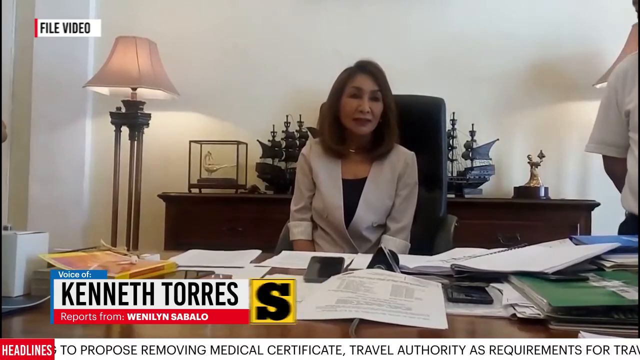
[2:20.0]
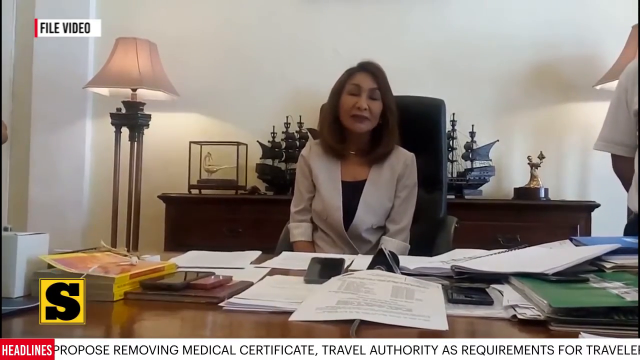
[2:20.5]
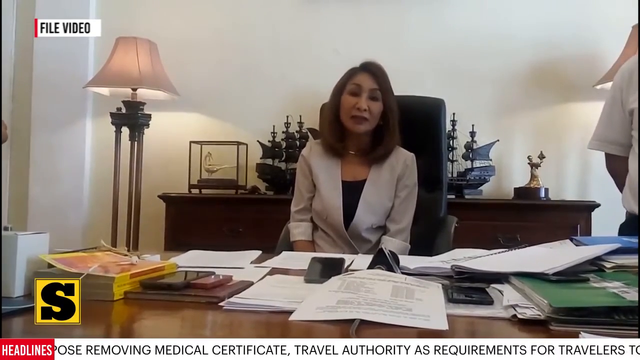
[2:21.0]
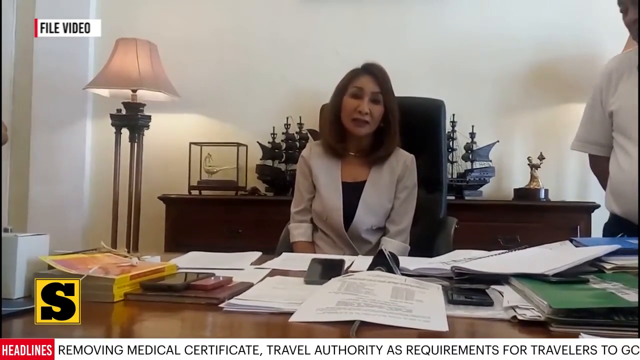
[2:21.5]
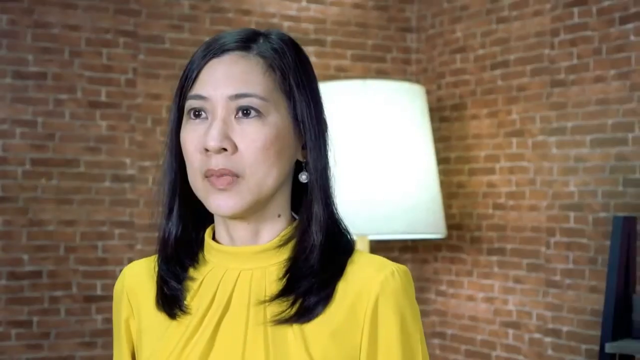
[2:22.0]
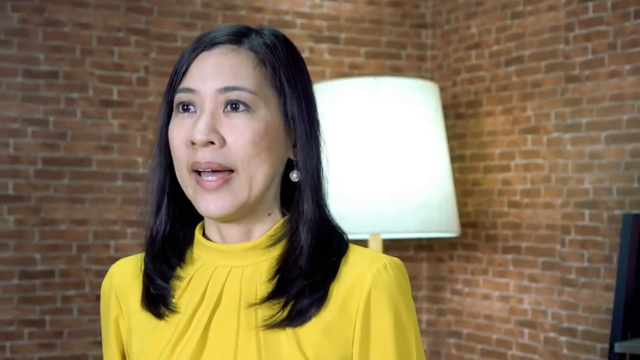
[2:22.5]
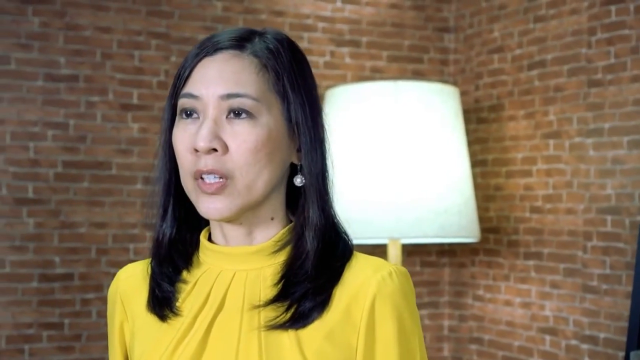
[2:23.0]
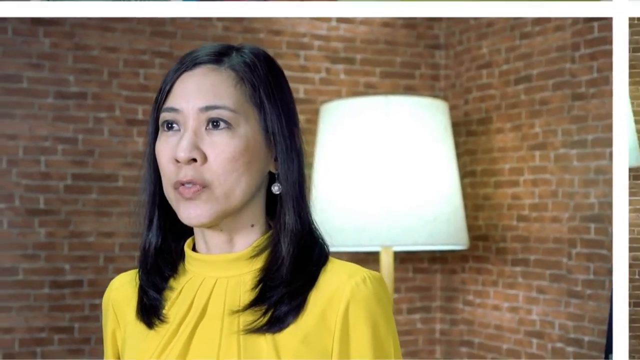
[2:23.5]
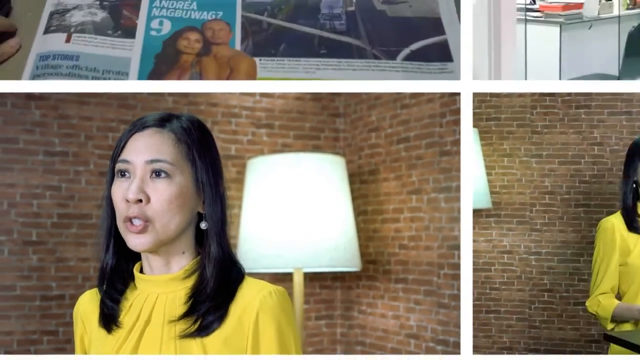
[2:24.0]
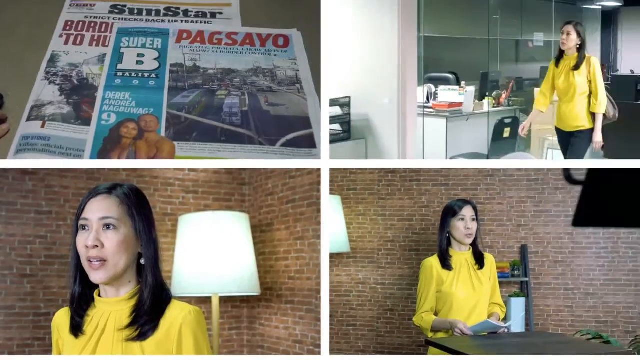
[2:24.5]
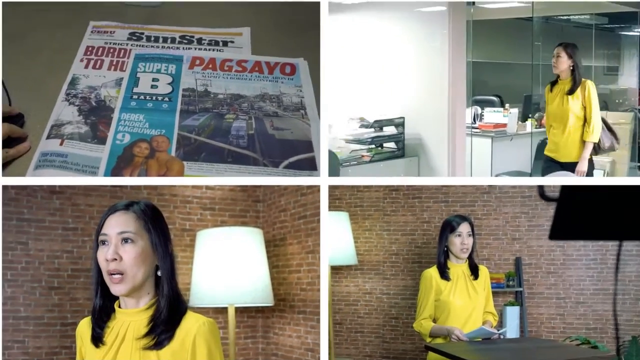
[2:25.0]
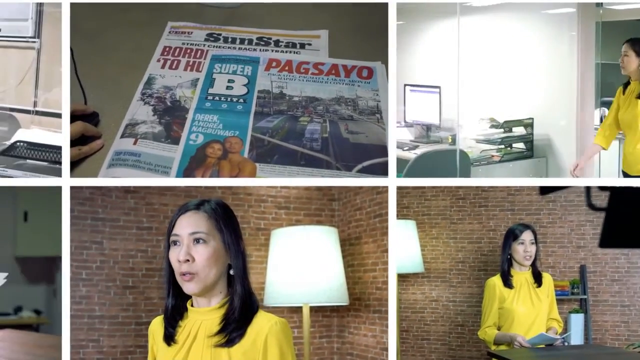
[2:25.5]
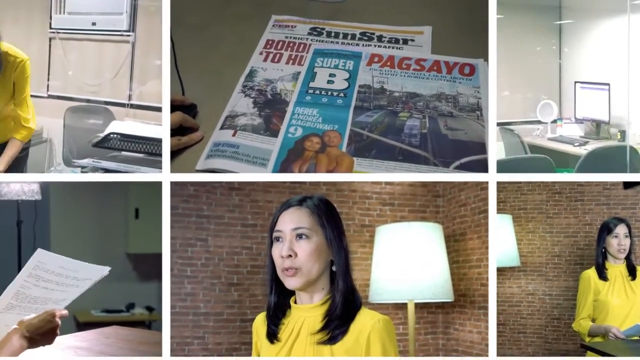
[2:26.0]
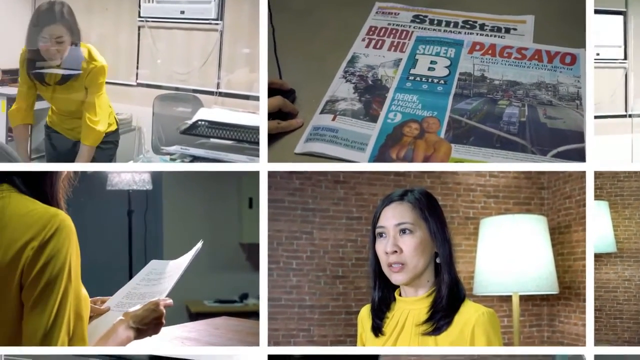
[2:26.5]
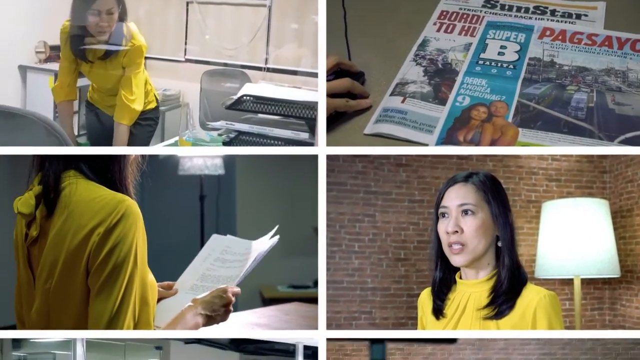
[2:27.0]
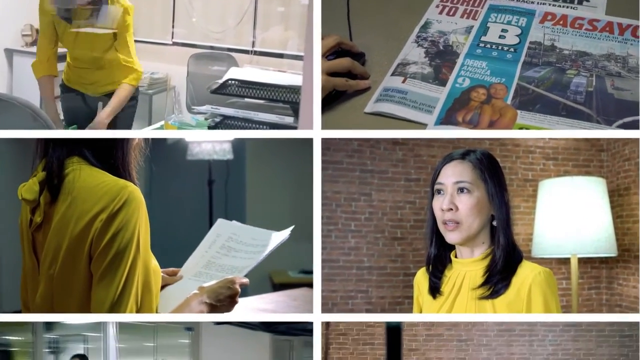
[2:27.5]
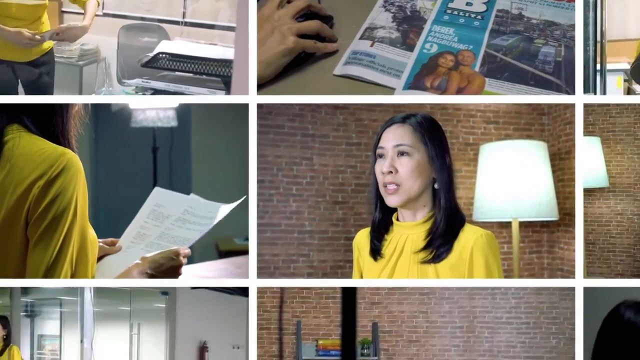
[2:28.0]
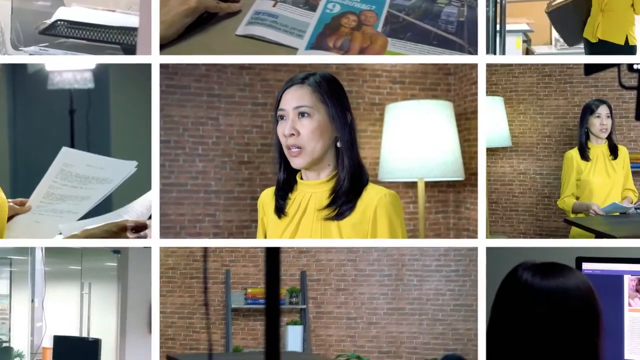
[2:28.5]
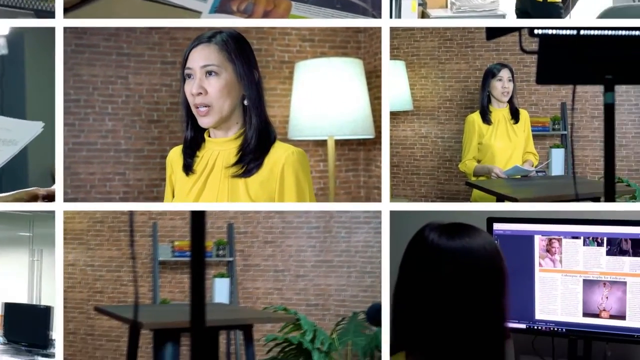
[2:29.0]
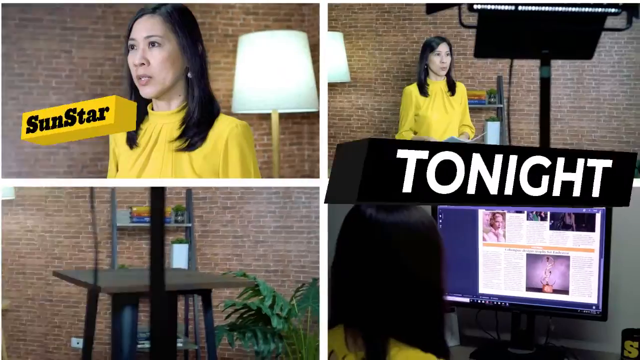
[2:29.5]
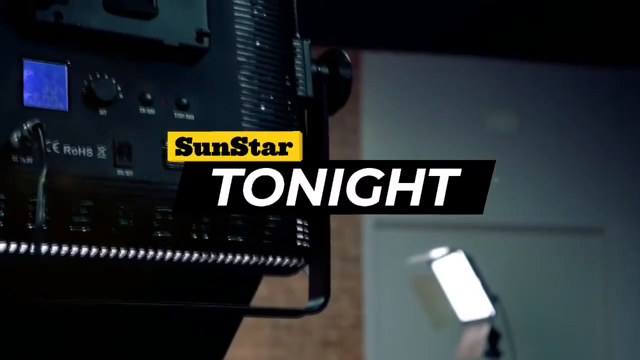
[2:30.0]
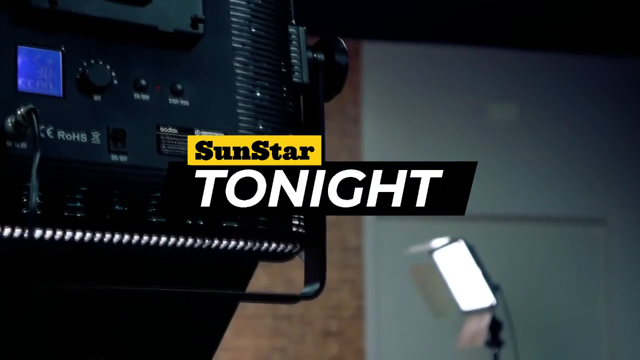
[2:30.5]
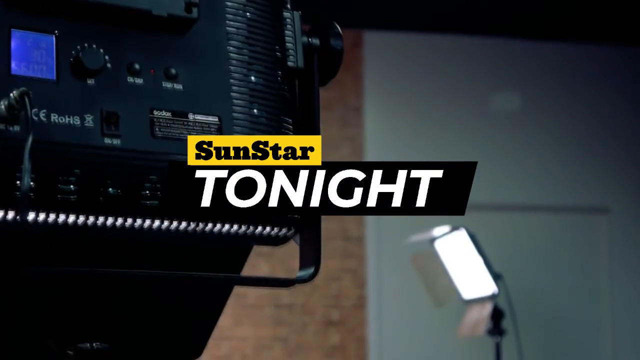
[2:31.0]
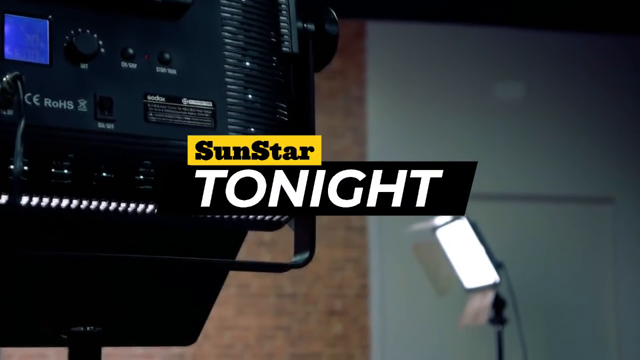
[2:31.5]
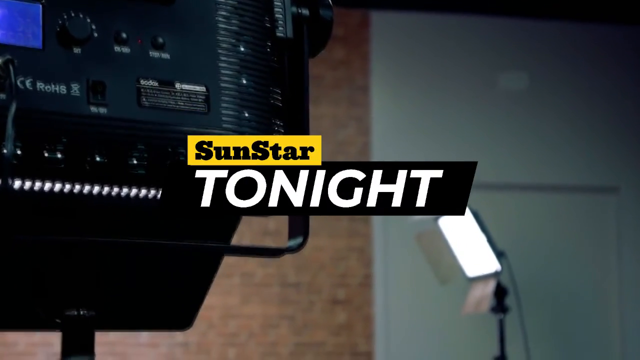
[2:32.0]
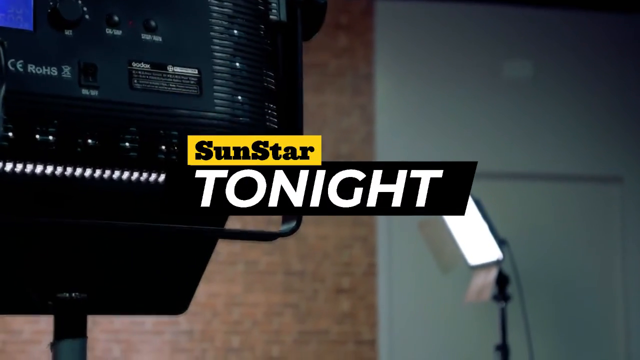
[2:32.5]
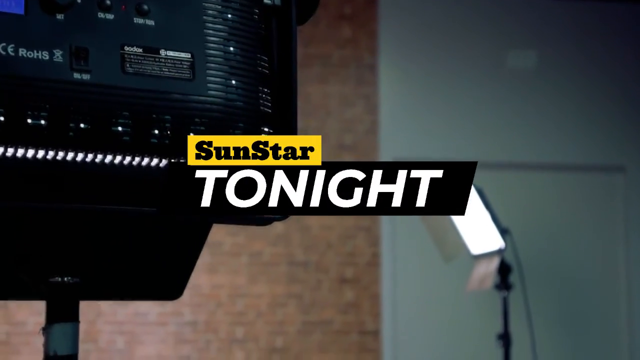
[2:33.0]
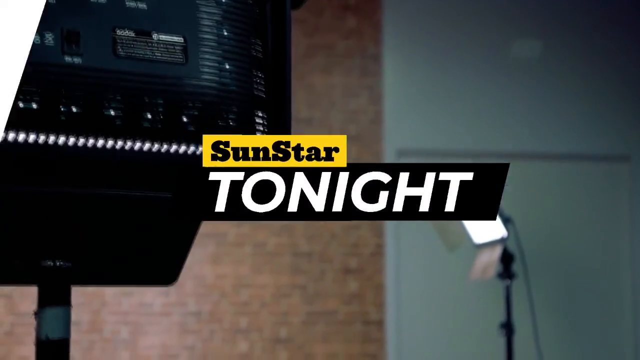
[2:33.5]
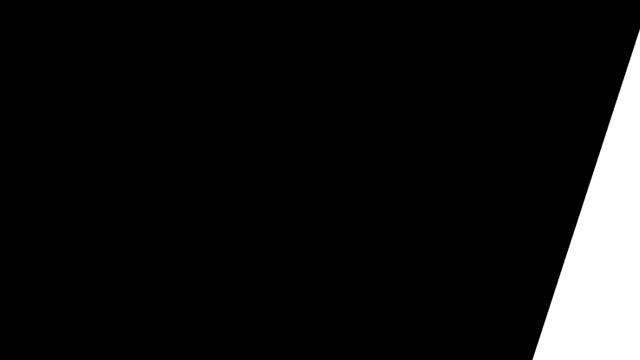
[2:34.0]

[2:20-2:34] The view pans to the highly stylized ending credits, which contain four video inserts of different behind-the-scenes scenes. The first three inserts feature the same news anchor from different angles, and the top left one is a screenshot of two newspapers, Sunstar and Pugs.io. The video then cuts to ending credits for Sunstar Tonight, showing television equipment, including some kind of camera in the back, and spotlights in a studio.